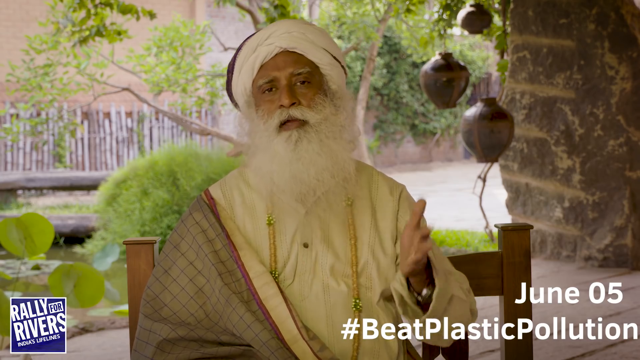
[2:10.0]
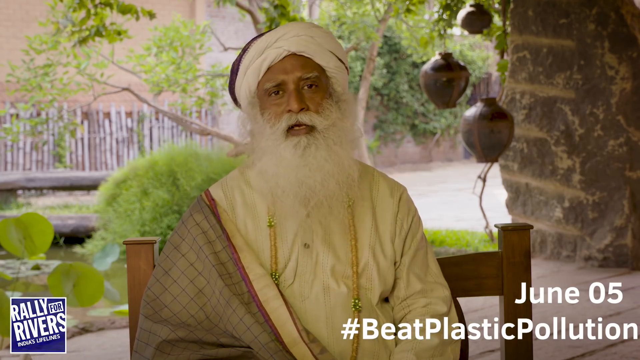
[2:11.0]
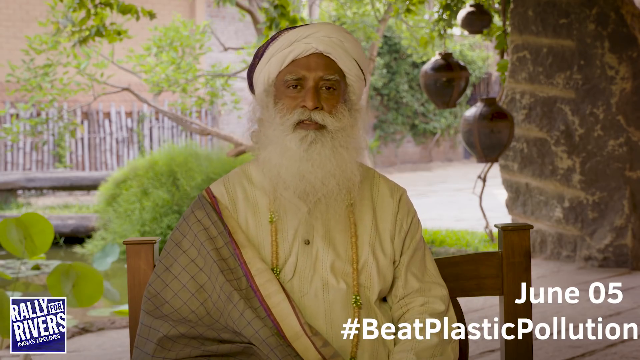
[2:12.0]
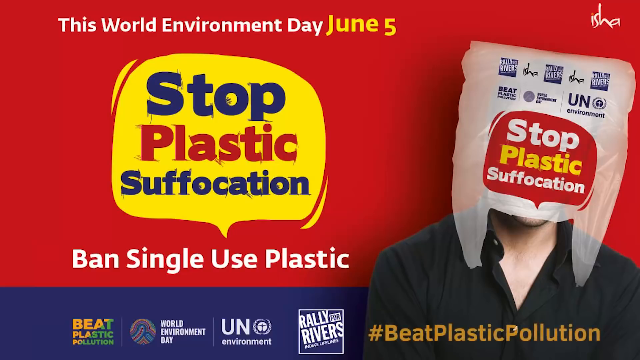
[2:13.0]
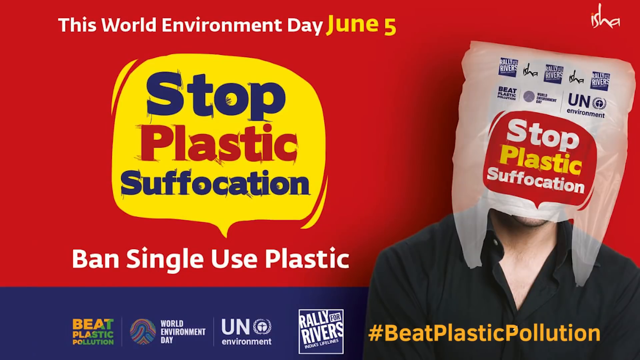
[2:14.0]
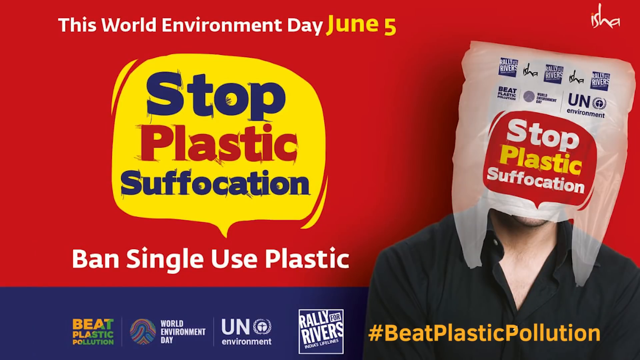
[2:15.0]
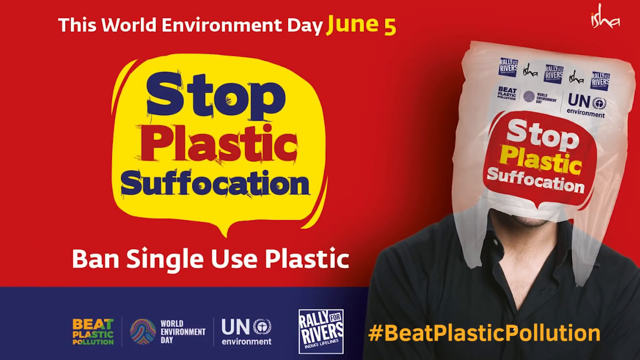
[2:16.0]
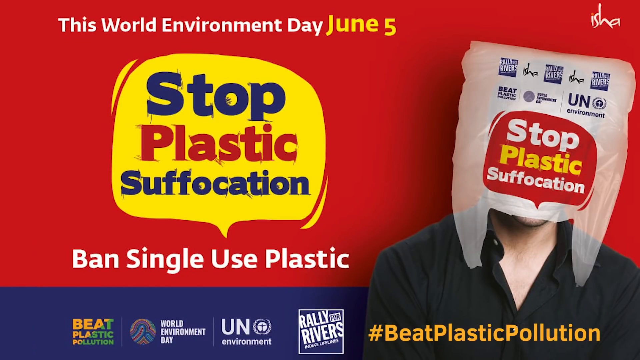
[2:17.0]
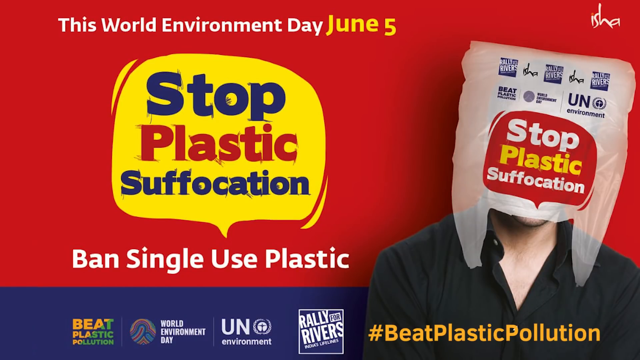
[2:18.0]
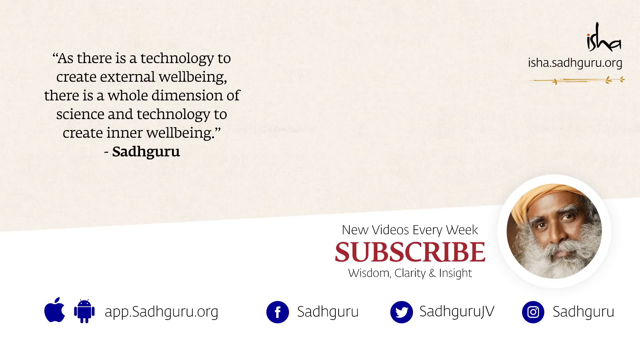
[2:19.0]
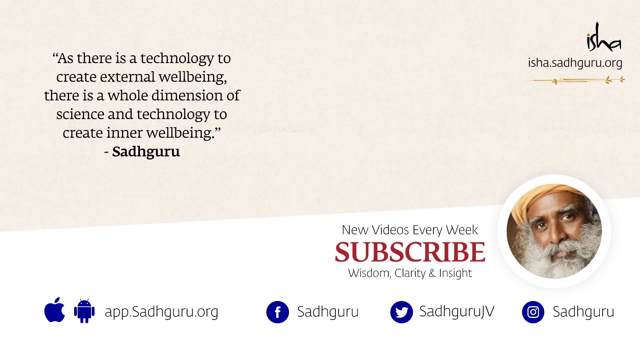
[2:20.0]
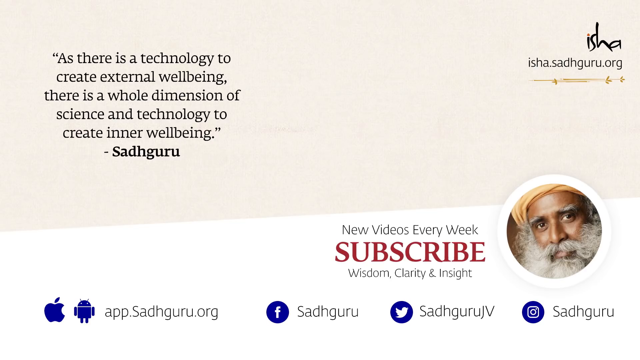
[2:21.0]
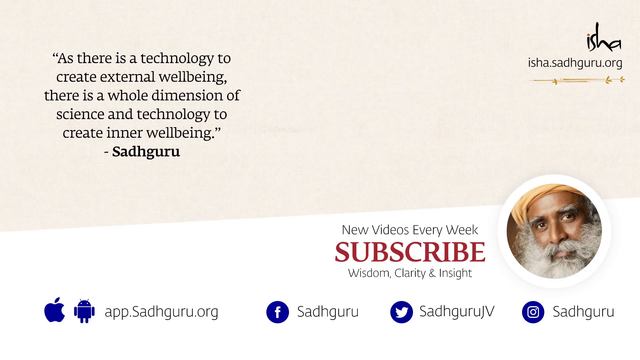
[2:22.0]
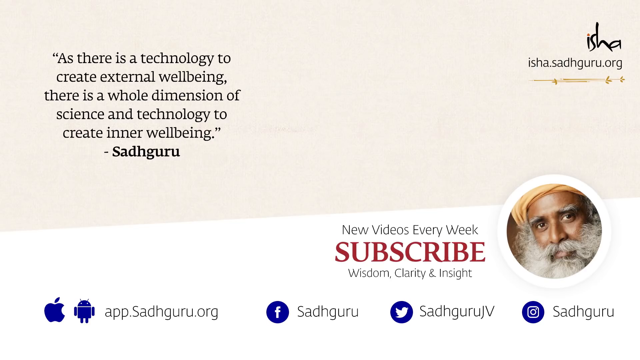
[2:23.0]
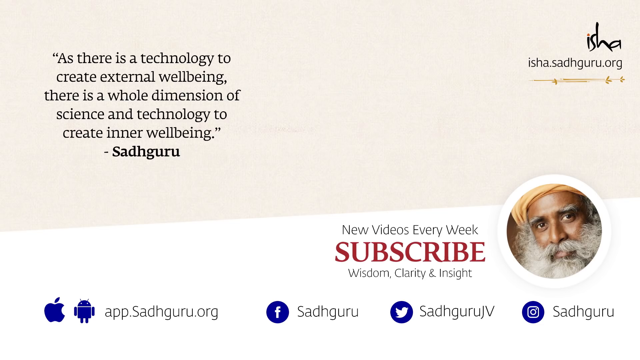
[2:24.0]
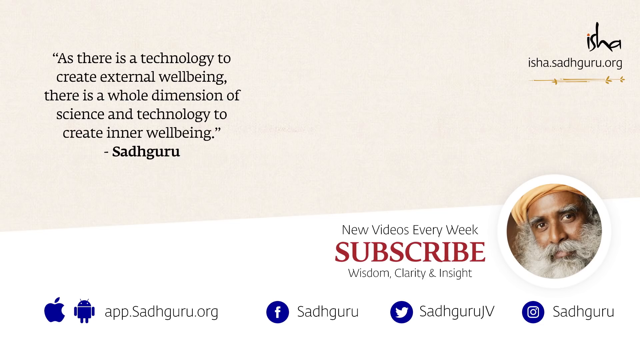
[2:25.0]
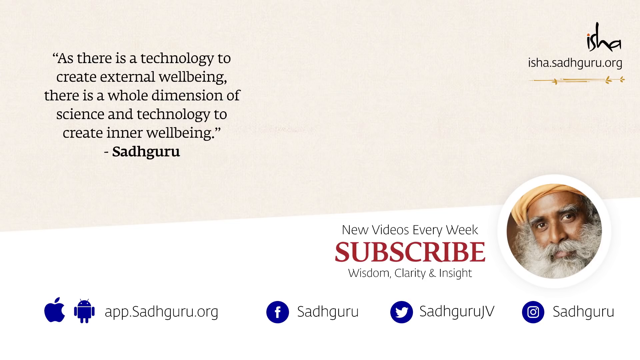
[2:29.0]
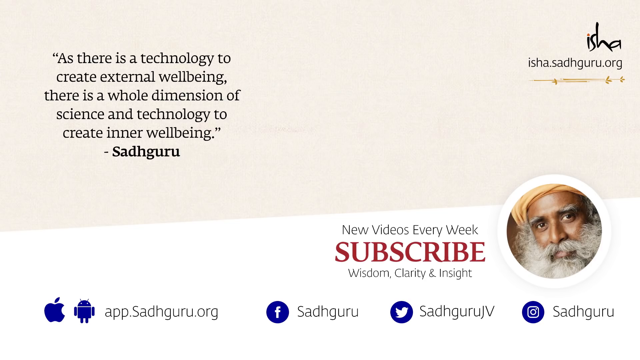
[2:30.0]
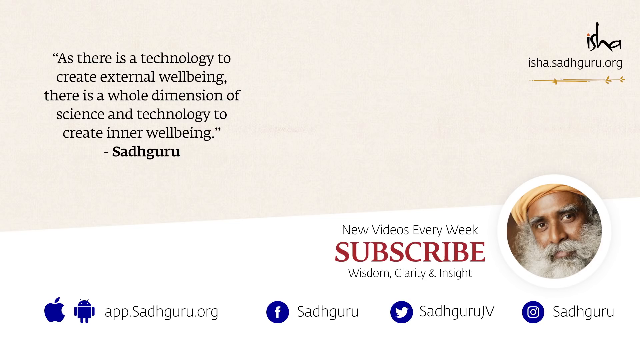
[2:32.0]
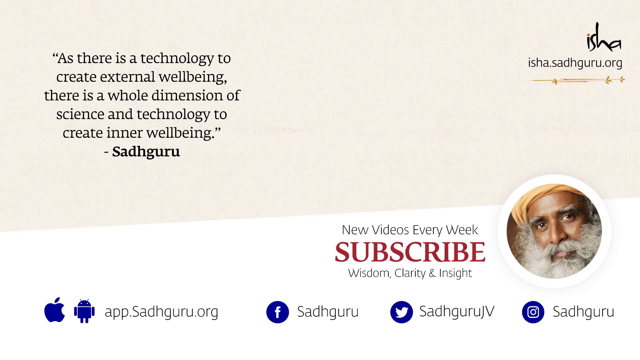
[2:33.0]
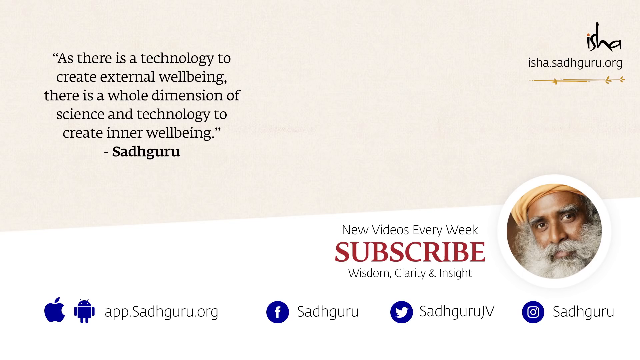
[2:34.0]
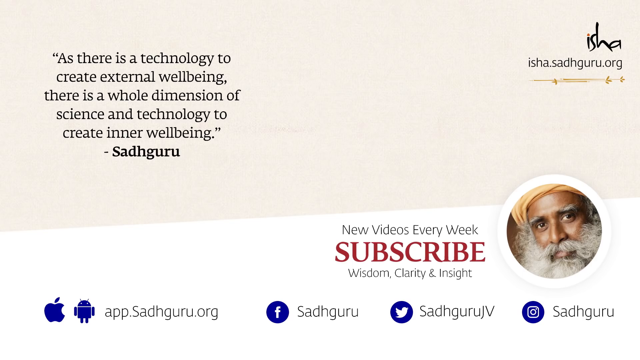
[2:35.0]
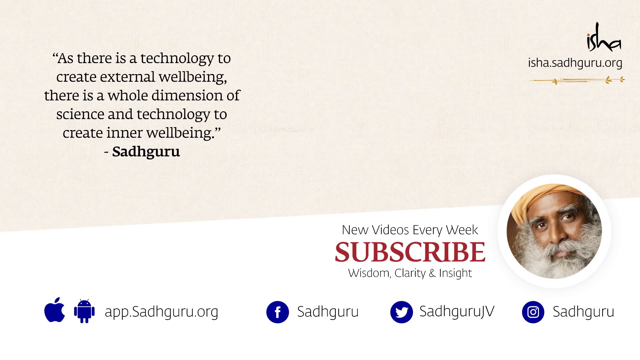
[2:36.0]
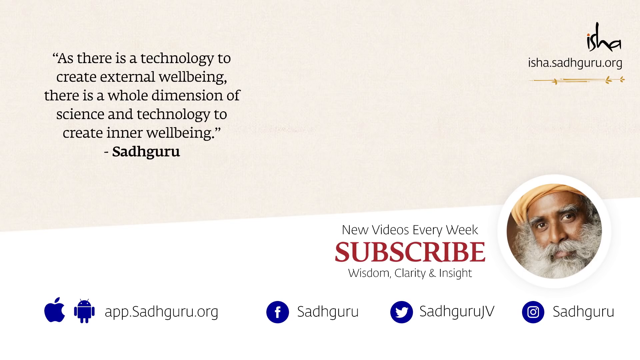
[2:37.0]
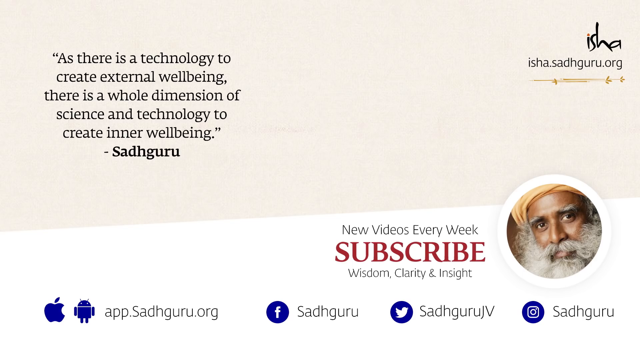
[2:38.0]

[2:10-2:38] The video concludes with a protest ad with a red background. On the left it reads "World Environment Day is June the 5th." A yellow comment balloon reads "stop plastic now" in large font, with "ban single use plastic" below it. The ad also shows a man with a plastic bag over his head bearing a red comment bubble that says "stop plastic now," with all of the sponsors shown above the red comment bubble.